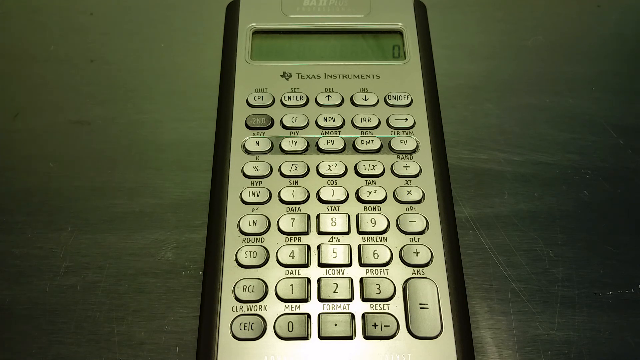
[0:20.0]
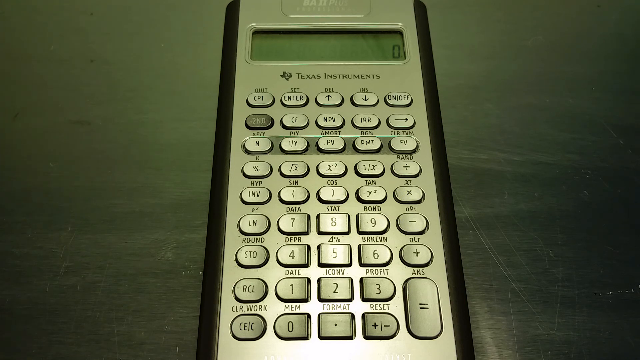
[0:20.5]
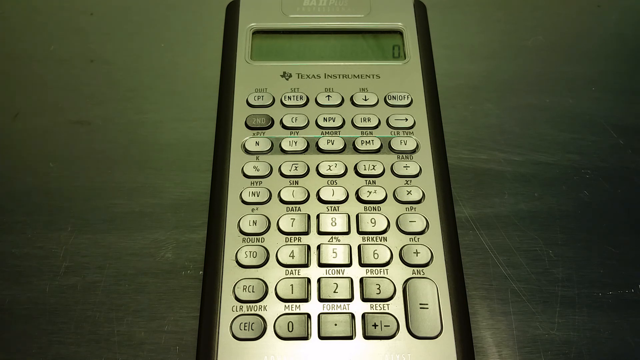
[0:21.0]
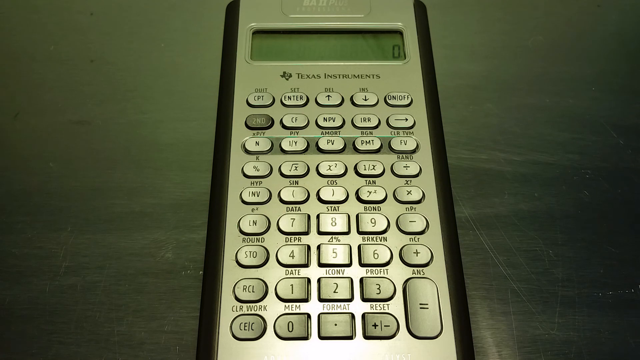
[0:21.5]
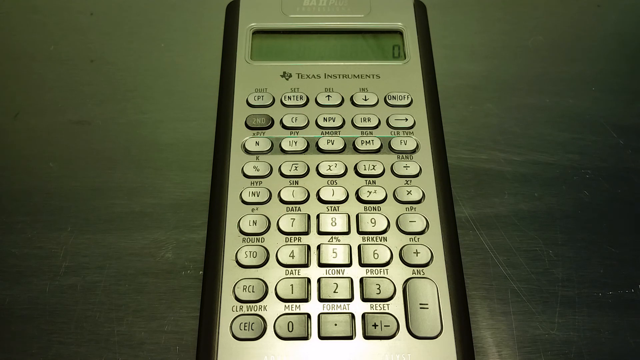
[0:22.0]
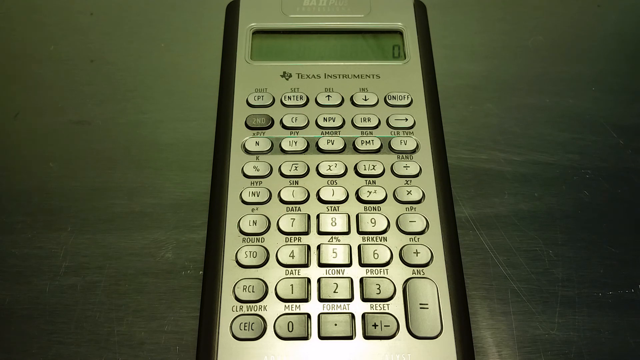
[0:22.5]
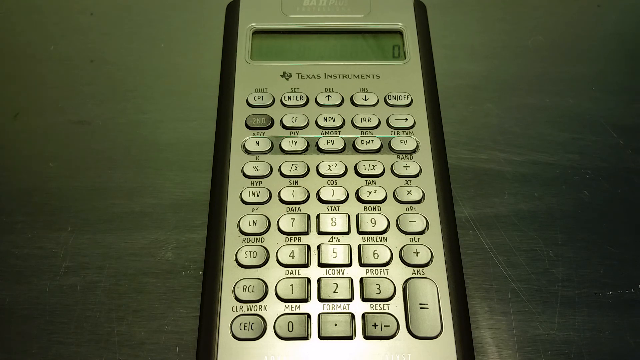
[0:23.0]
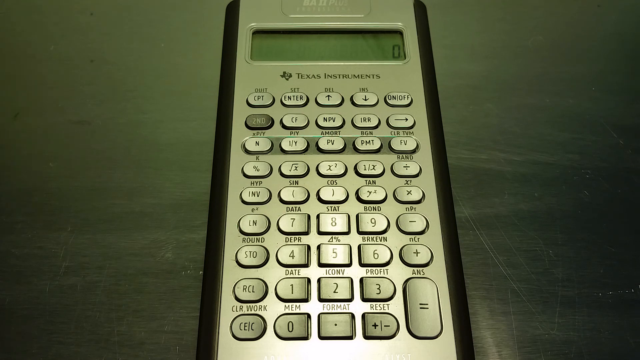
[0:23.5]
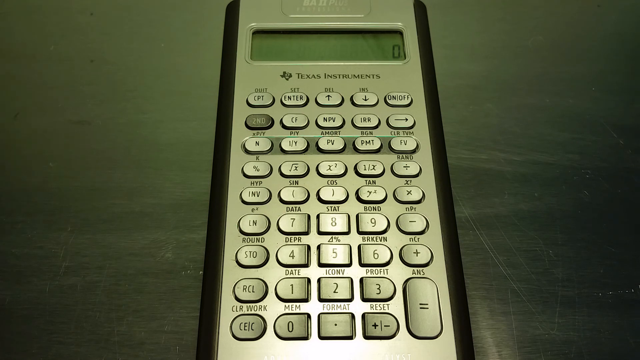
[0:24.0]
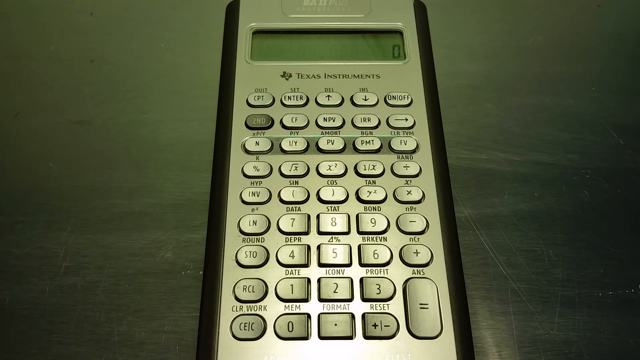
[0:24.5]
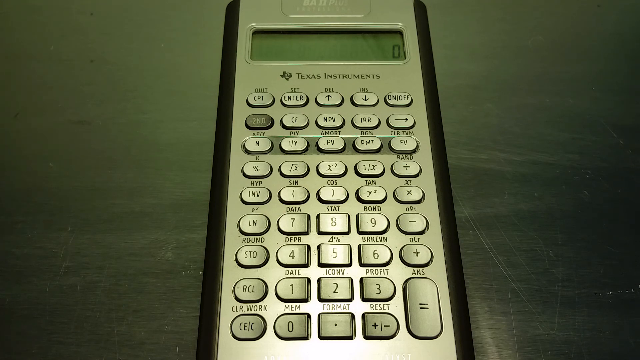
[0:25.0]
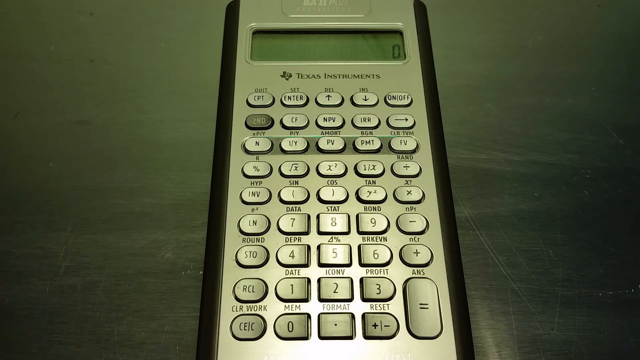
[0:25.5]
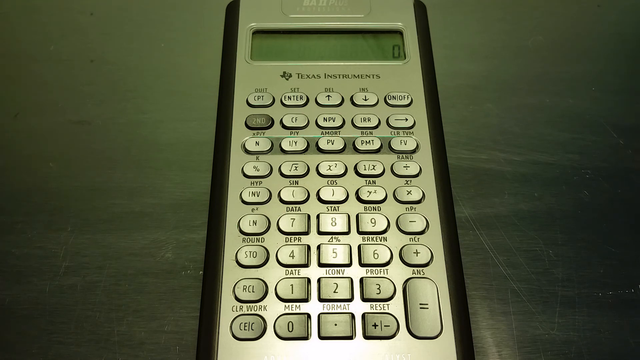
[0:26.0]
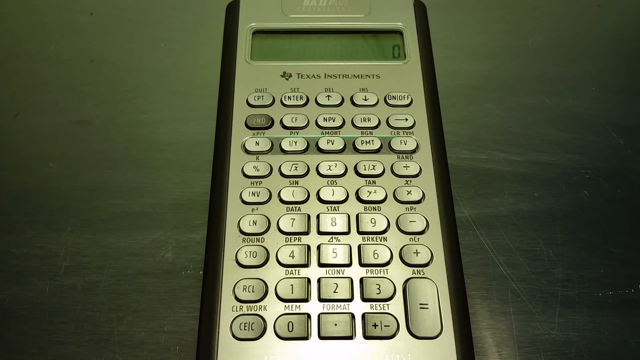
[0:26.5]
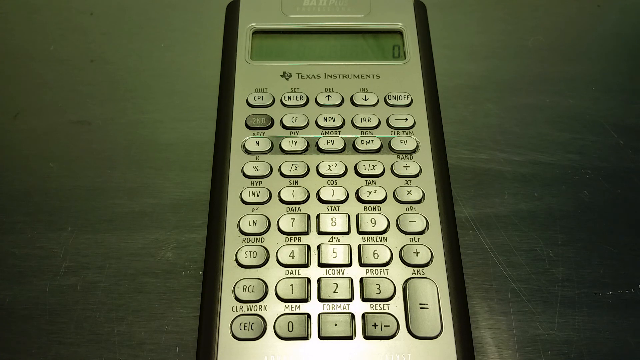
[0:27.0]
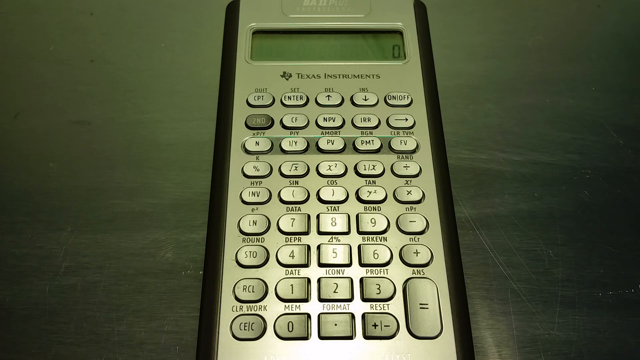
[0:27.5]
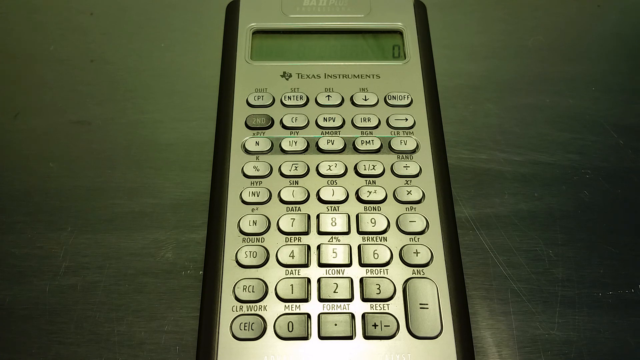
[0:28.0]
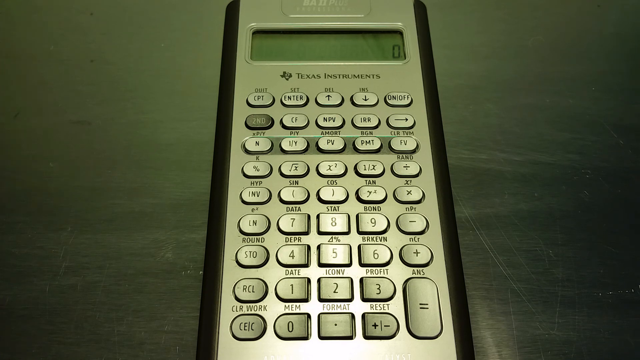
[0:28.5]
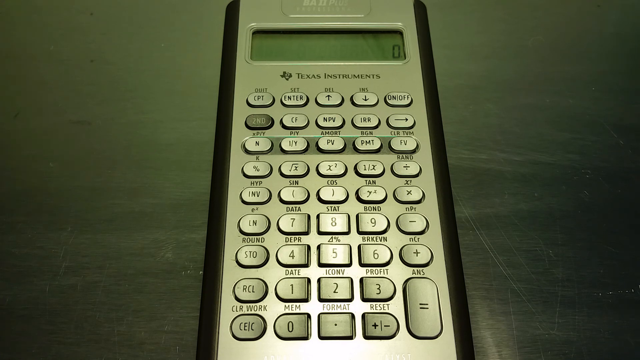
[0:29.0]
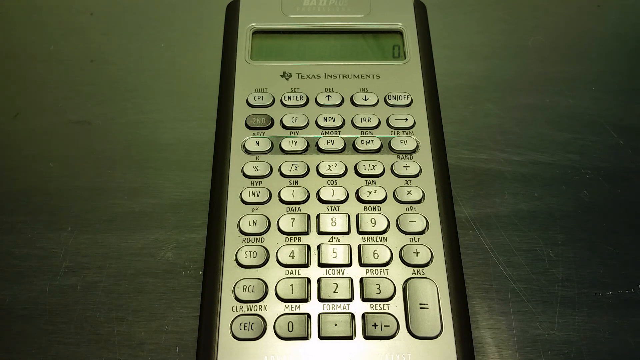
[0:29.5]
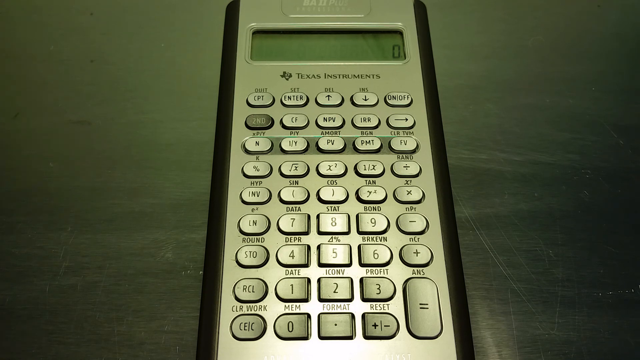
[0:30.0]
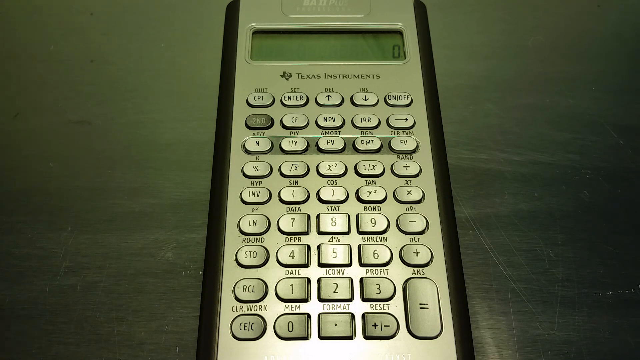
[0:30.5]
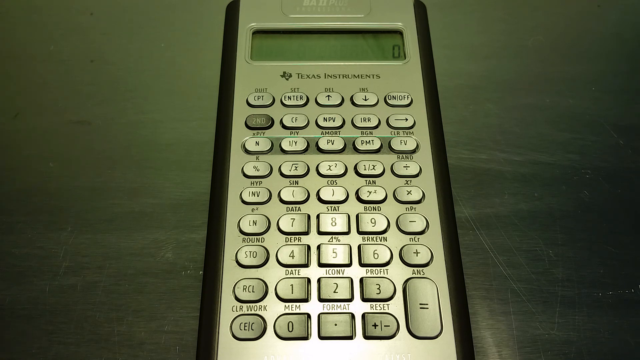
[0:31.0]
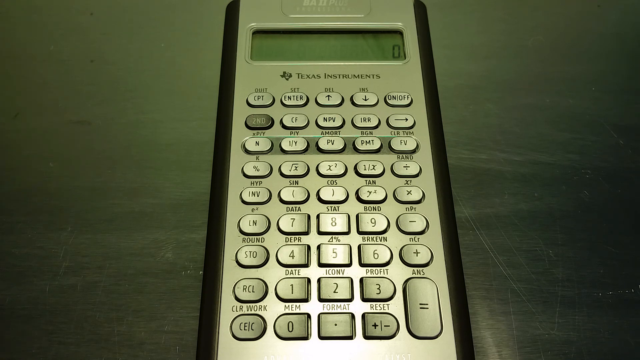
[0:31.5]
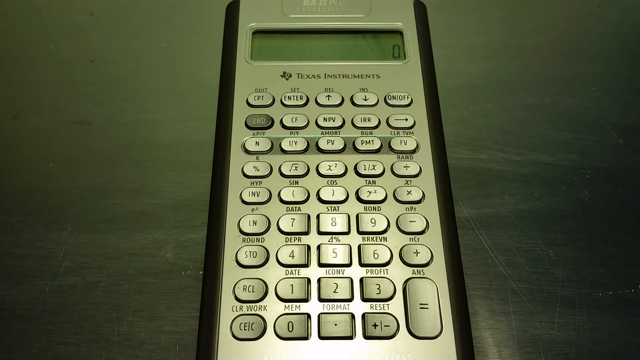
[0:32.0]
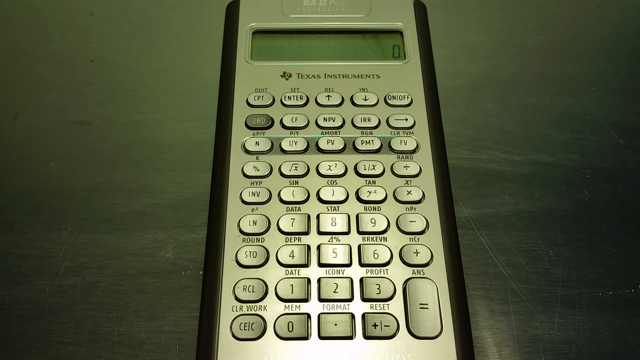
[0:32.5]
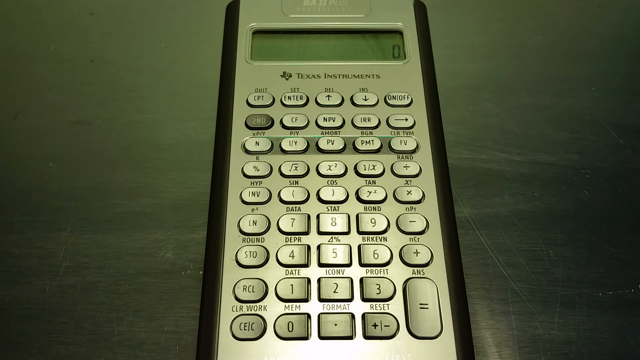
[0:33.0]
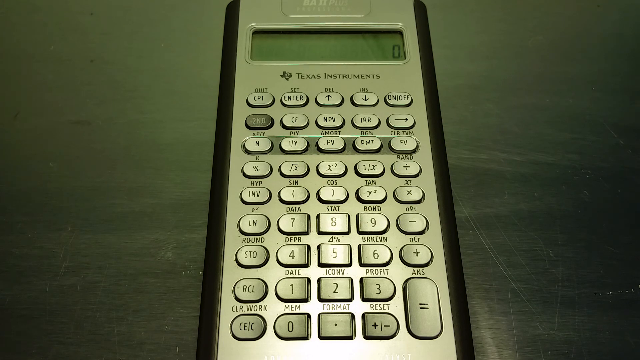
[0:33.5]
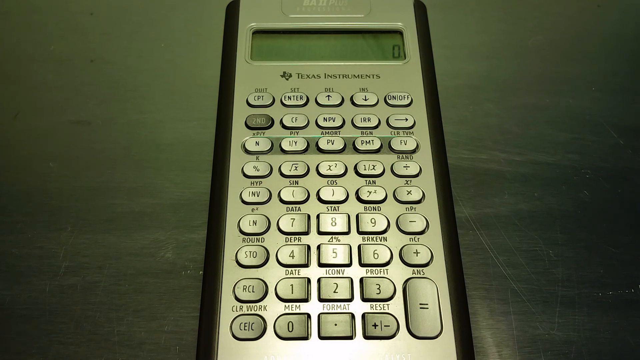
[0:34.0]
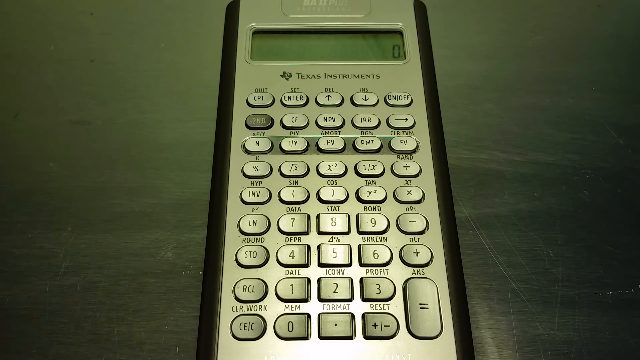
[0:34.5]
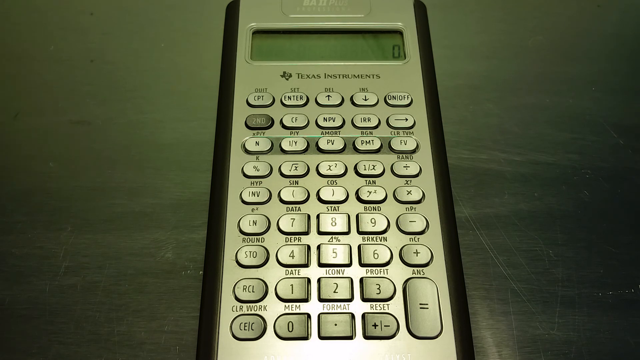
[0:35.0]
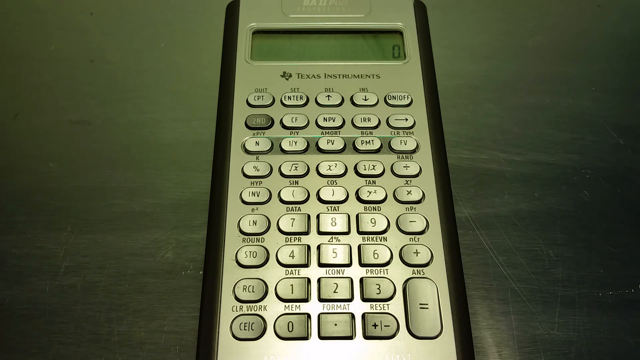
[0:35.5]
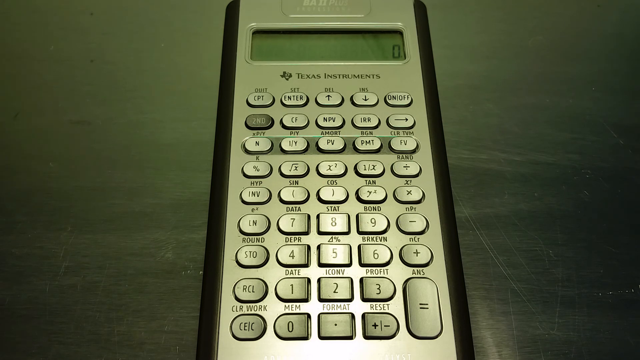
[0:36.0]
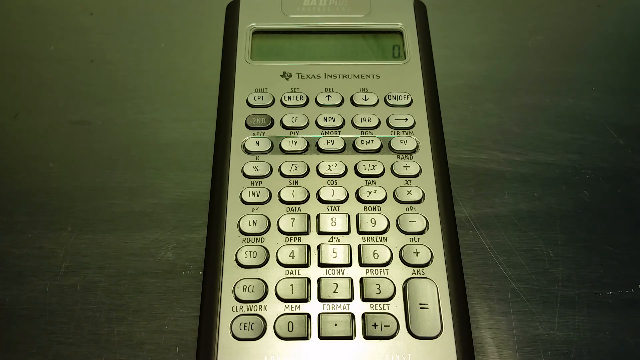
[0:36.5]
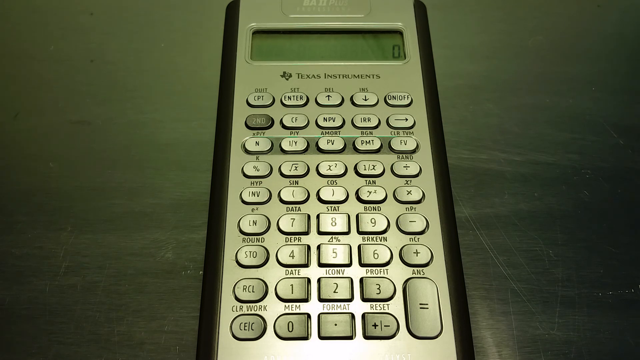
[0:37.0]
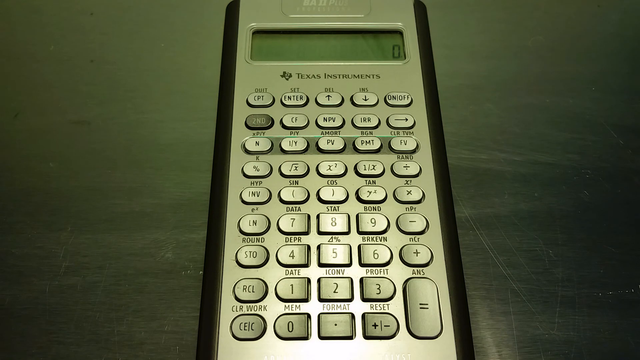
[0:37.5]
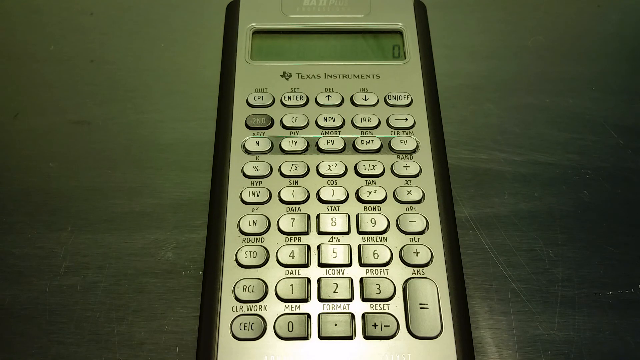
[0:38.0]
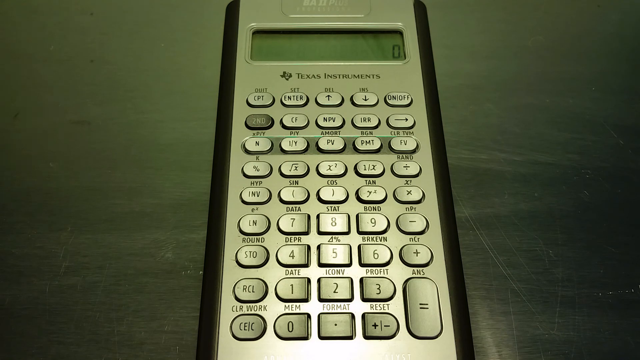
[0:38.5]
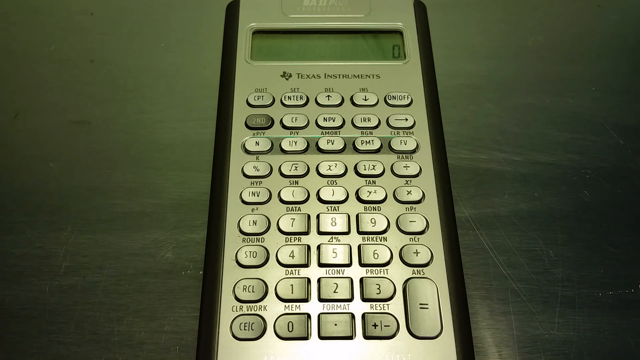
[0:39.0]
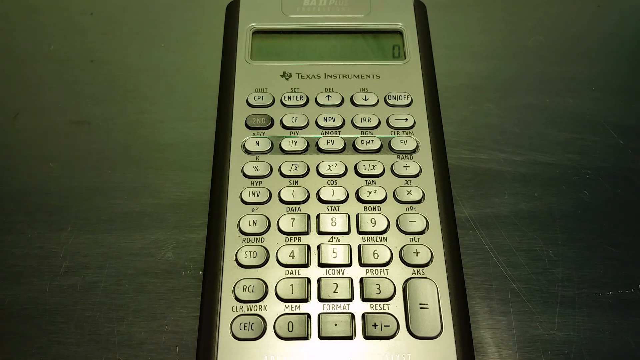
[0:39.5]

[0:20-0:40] The Texas Instruments calculator's buttons are visible row by row. On the top row, the first button at the top left is CPT; going right is enter with "set" on top, then a button with an arrow going up, then one with an arrow going down, and on the far right an on and off button. The second row, from left, has 2nd, CF, NPV IRR, and on the right an arrow pointing to the right. The third row has N, I/Y, PV, PMT, and FV on the far right. The fourth row has a percentage, a square root, a squared button, then one that is barely visible but looks like it has a percentage and "/x", and on the far right a division sign with "rand" on top.